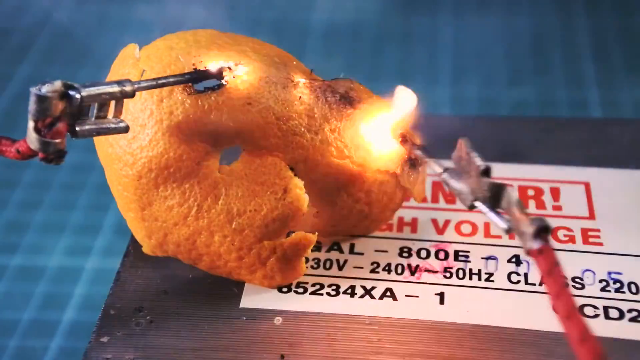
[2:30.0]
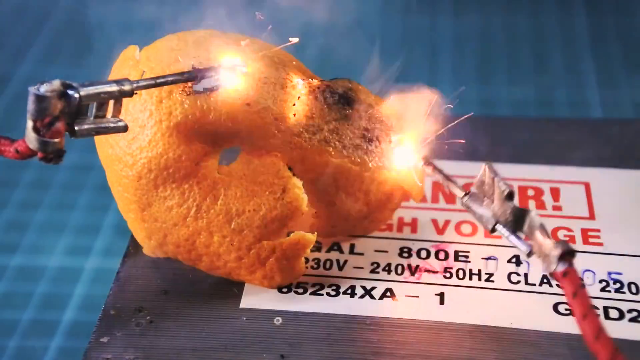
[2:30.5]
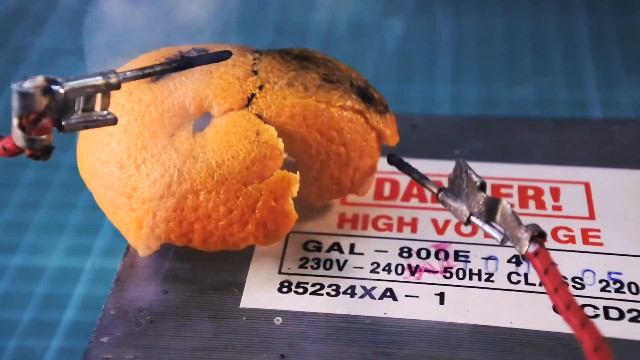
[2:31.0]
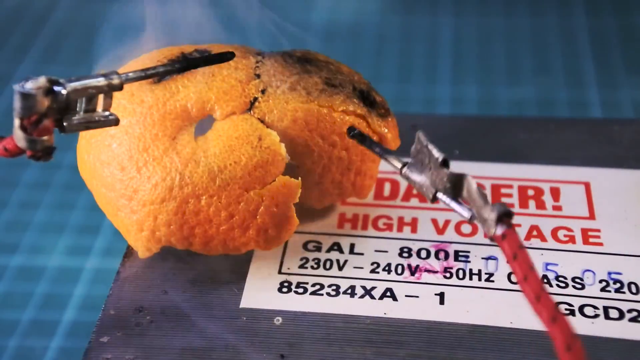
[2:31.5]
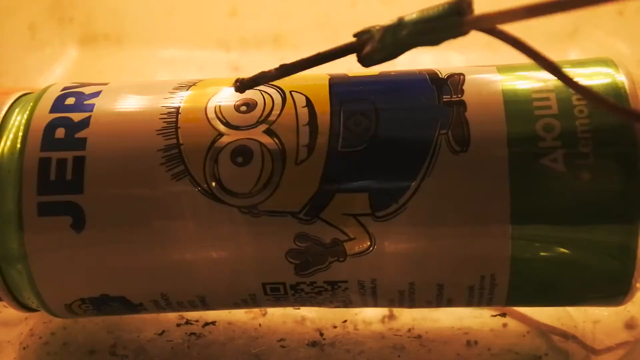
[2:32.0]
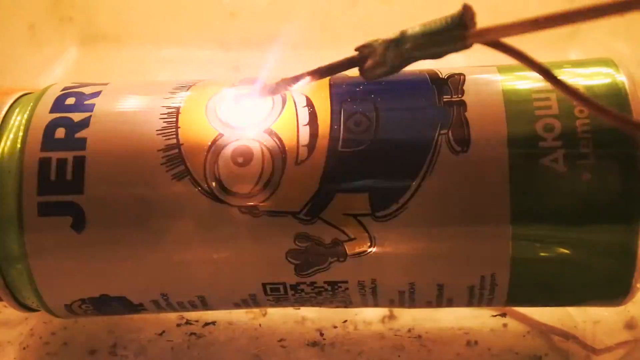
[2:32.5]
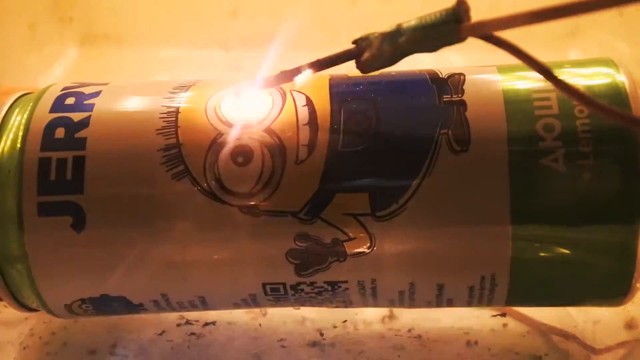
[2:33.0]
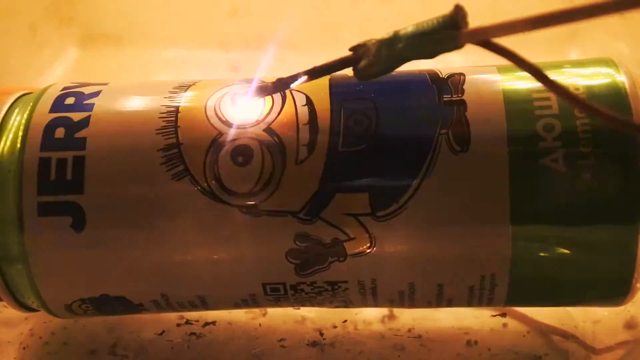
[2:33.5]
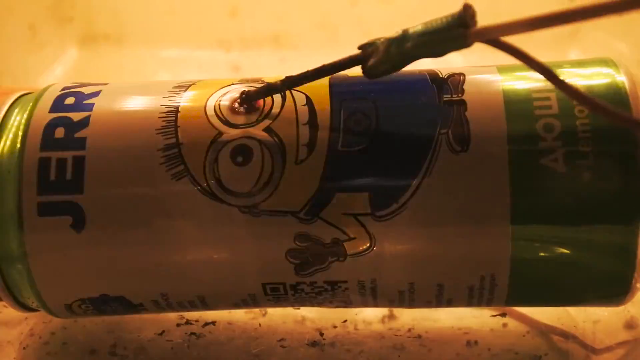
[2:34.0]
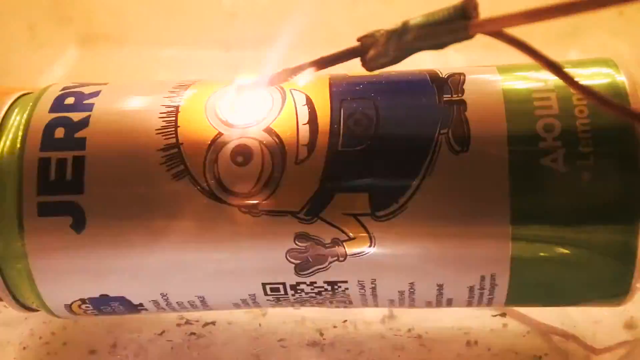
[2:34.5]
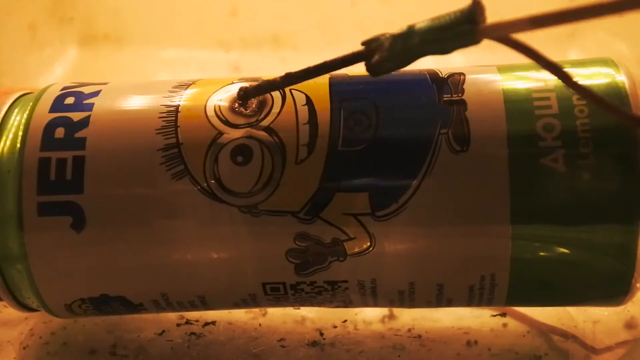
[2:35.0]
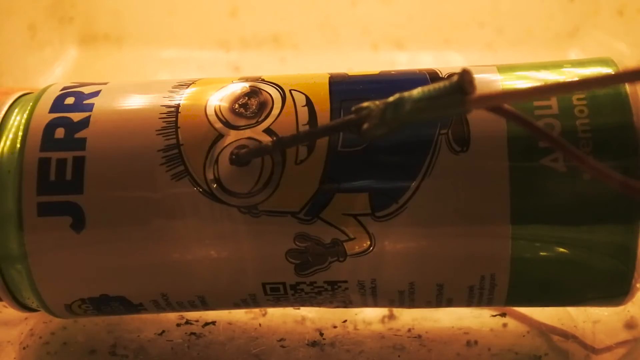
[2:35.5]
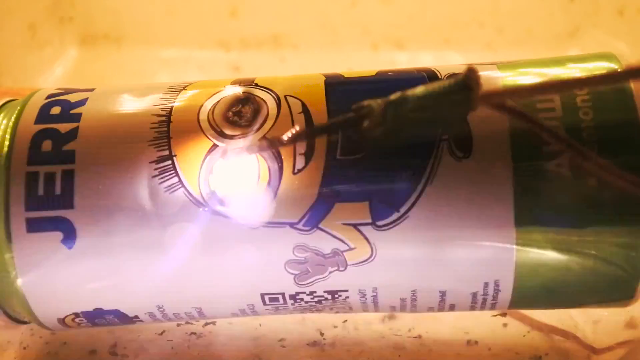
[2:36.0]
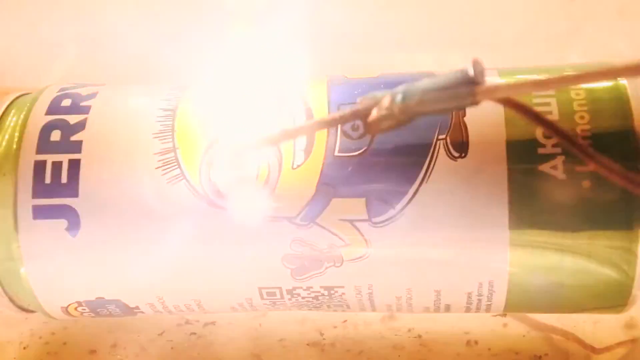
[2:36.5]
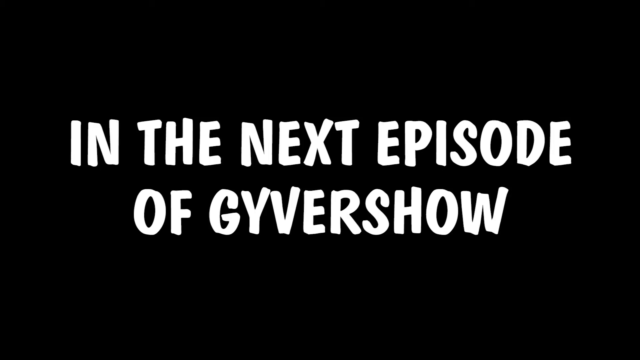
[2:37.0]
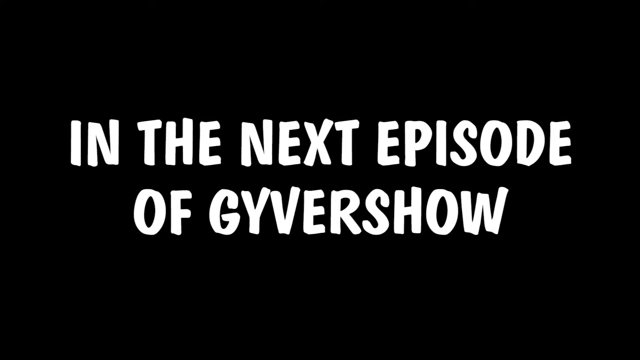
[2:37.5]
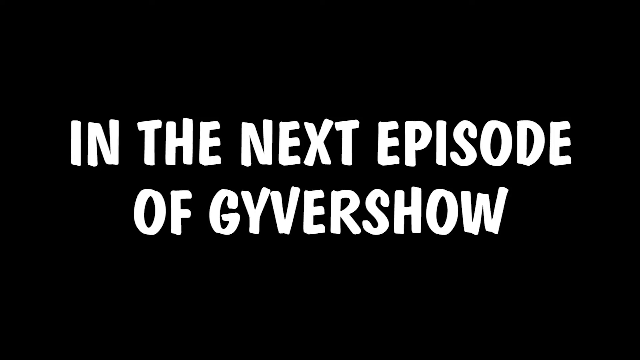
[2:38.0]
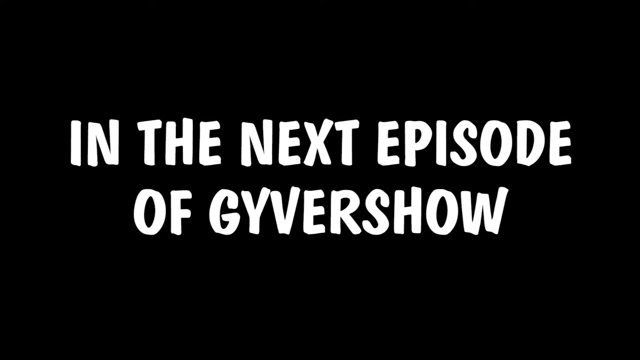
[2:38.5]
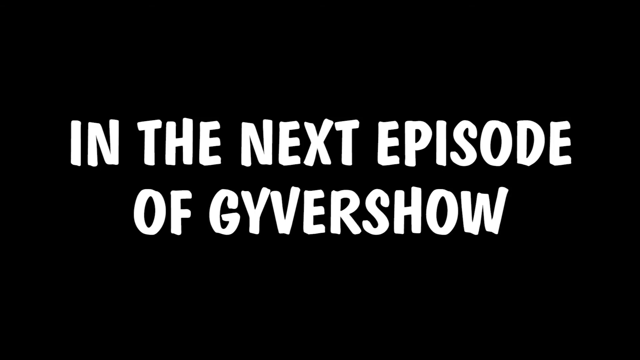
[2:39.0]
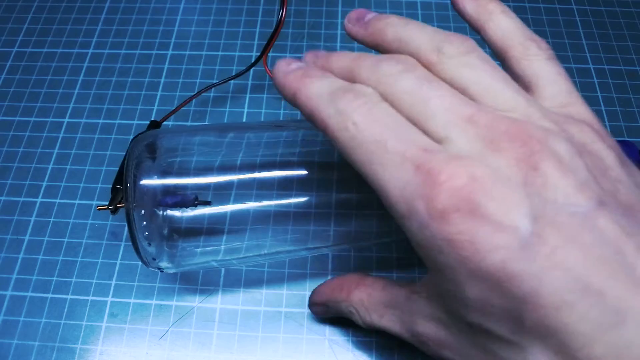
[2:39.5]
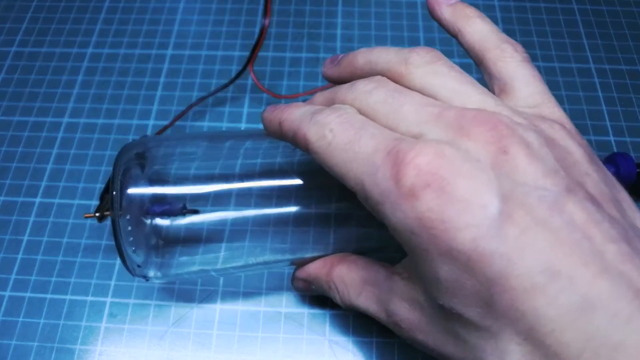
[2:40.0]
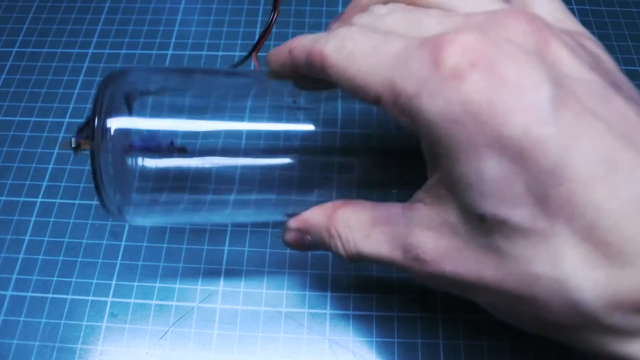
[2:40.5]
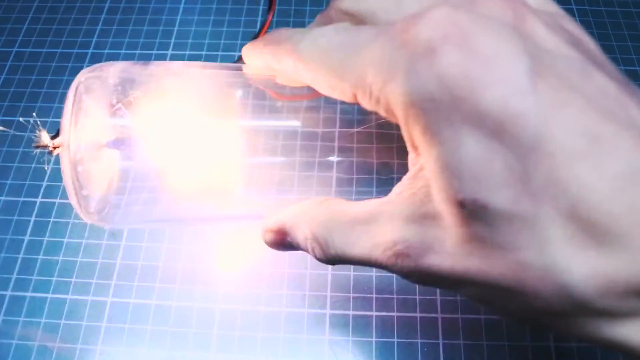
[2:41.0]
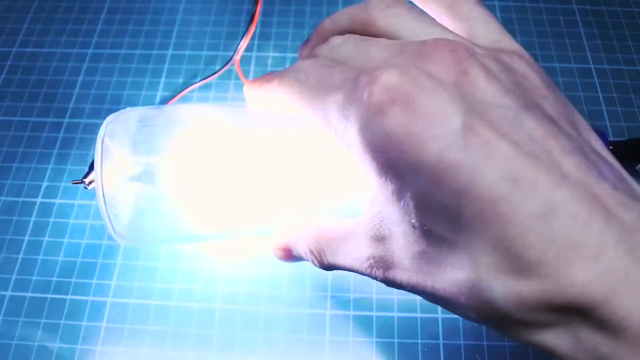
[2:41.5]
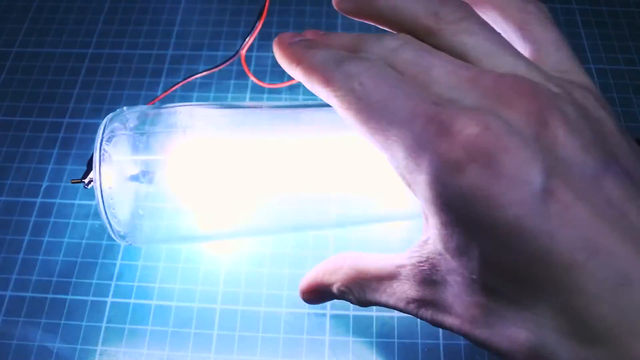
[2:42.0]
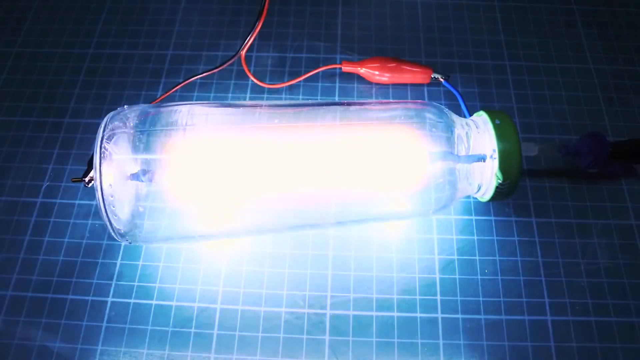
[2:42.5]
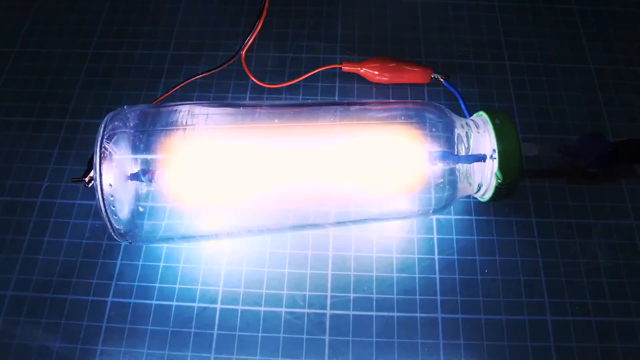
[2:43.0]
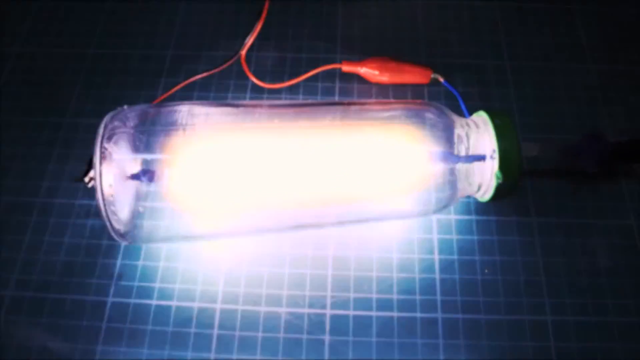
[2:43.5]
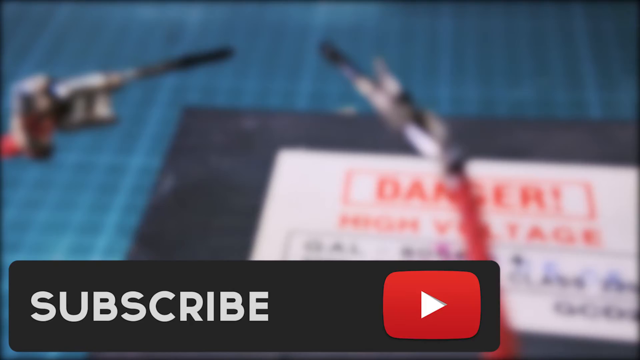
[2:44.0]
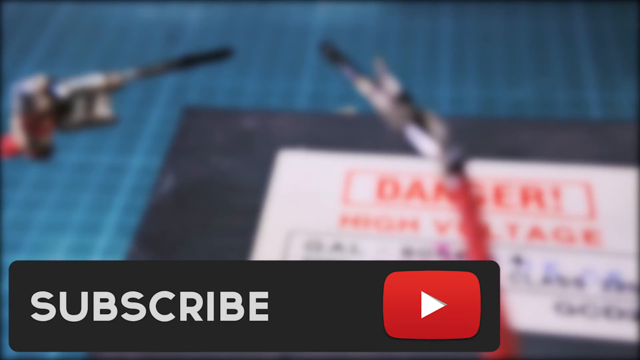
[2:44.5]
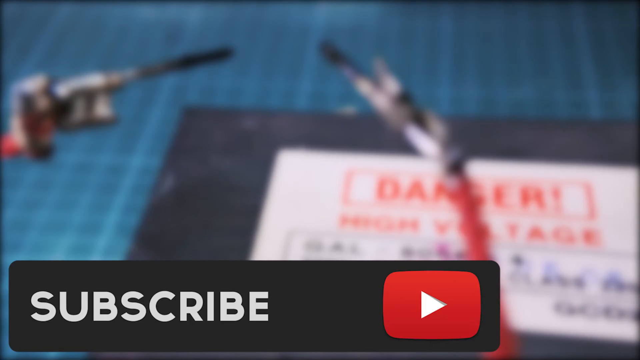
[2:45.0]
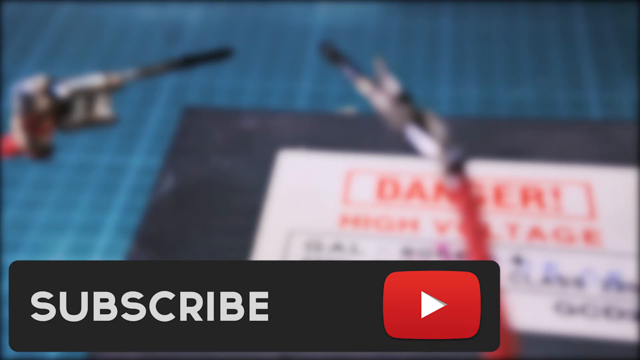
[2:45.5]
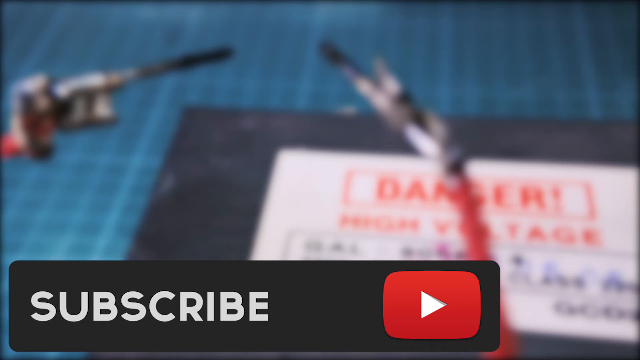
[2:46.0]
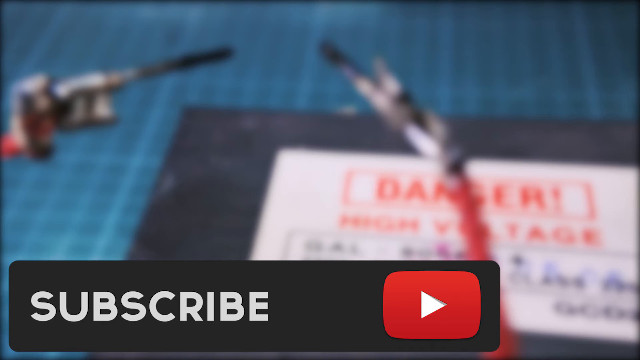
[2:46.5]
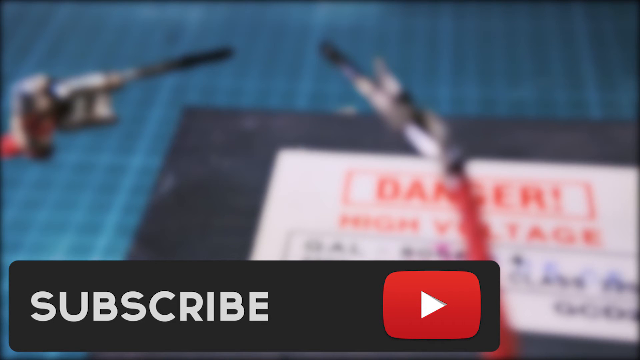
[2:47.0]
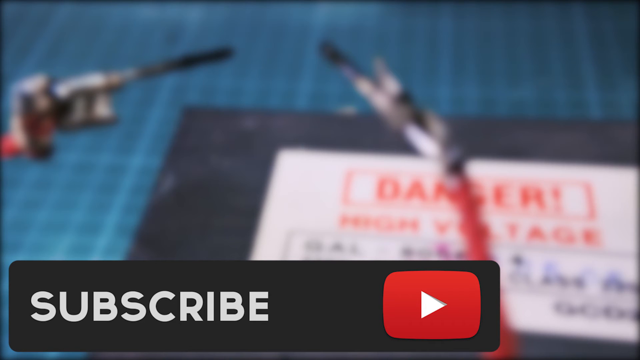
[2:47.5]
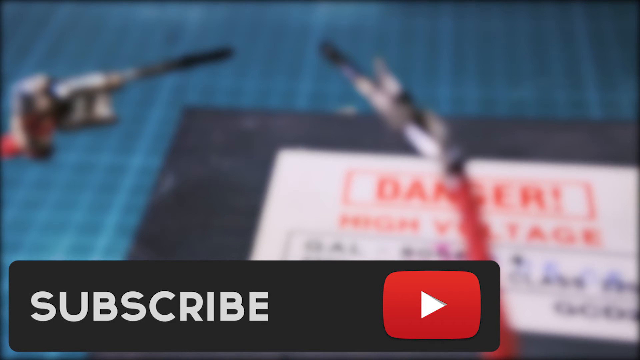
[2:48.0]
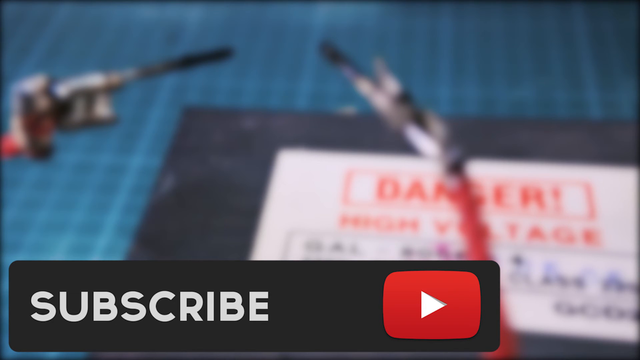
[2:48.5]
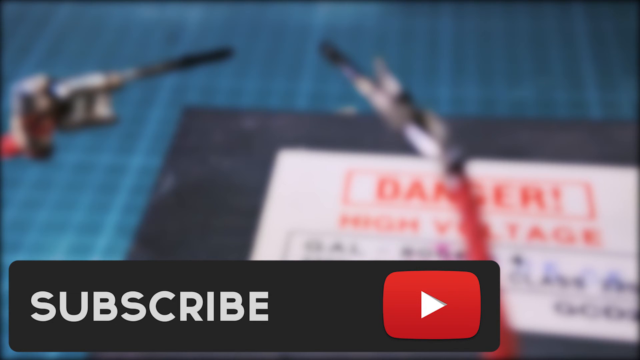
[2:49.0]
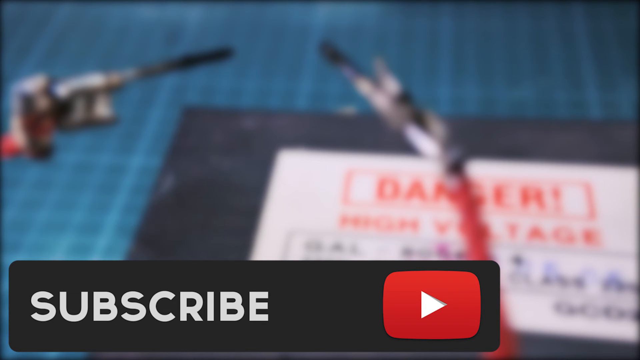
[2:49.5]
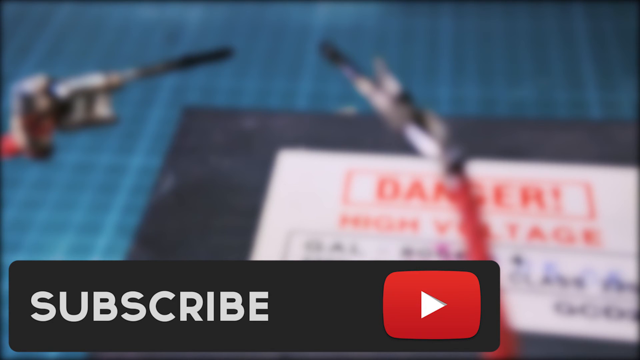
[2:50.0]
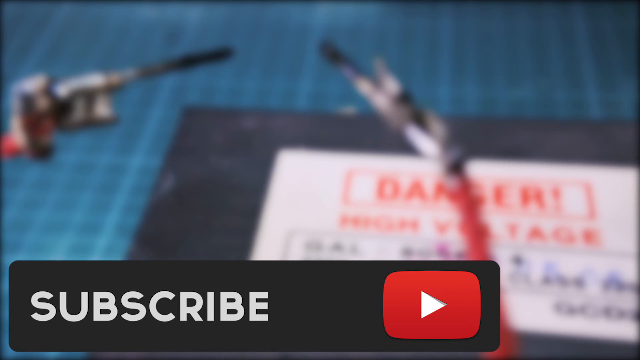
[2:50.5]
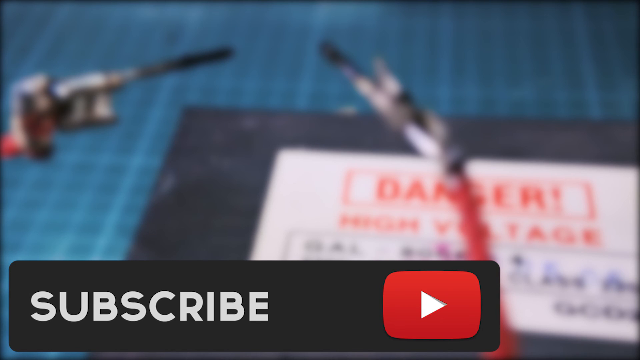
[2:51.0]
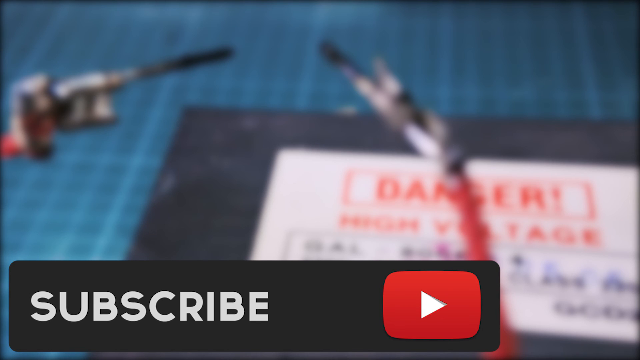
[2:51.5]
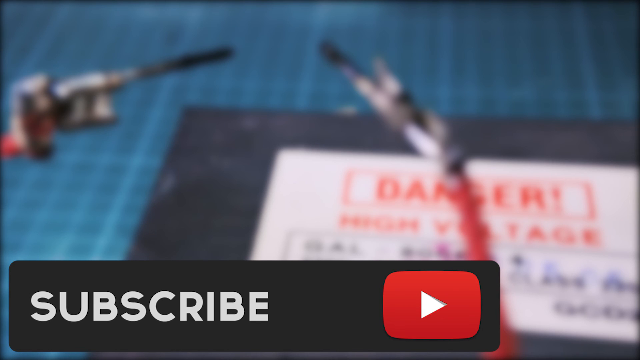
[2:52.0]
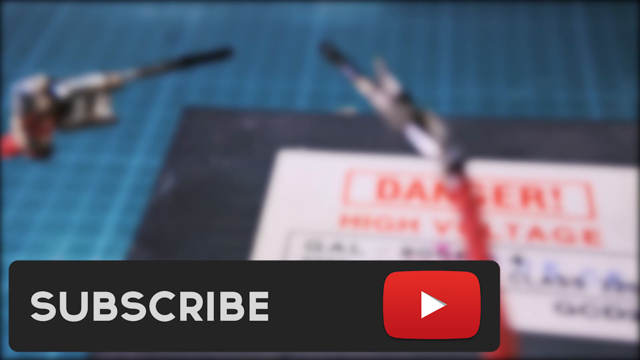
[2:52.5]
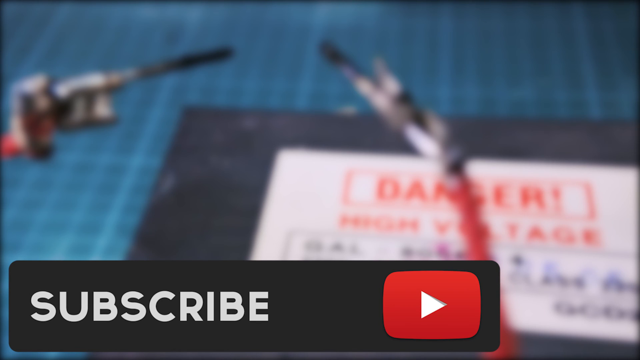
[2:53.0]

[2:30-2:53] The machine burns the orange peel with its electrical current, and it also burns aluminum on a can in a sort of decorative way. Text then says "in the next episode of the Guyver show", and it looks like they will make some type of light similar to what was done here. The video then asks viewers to subscribe to the channel.